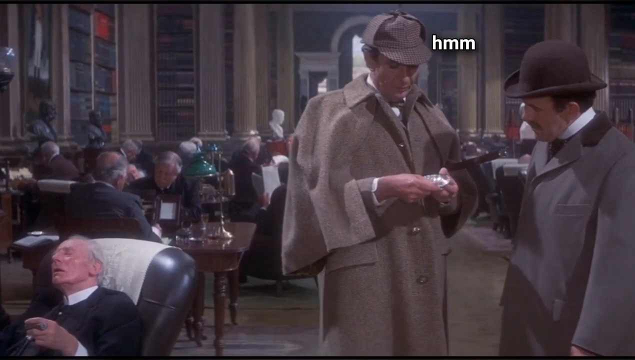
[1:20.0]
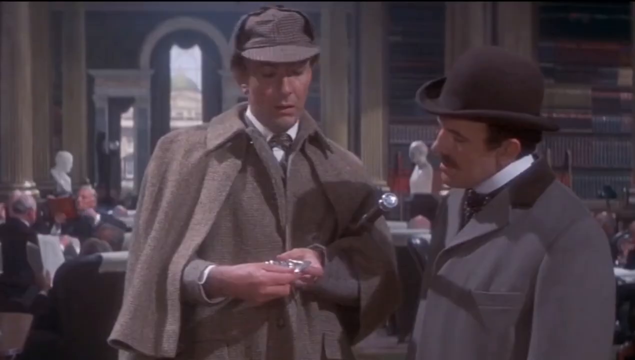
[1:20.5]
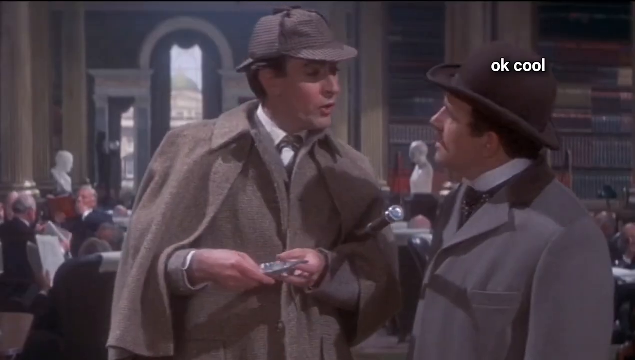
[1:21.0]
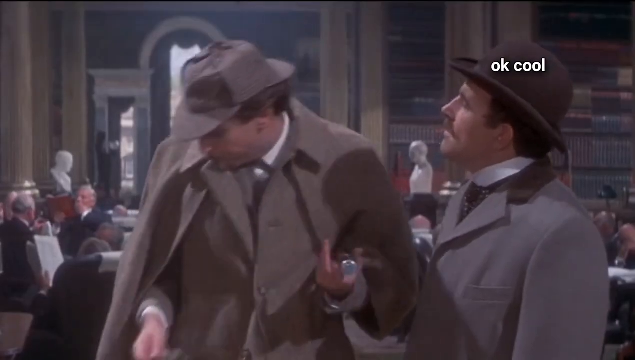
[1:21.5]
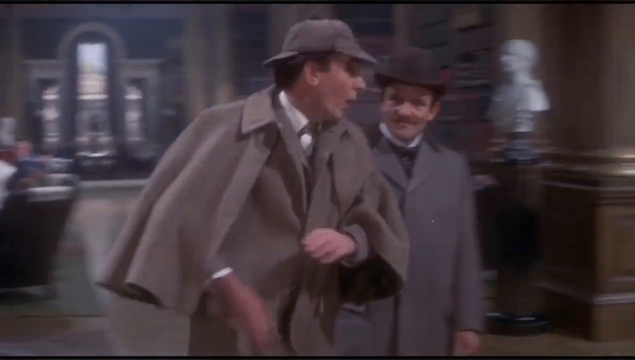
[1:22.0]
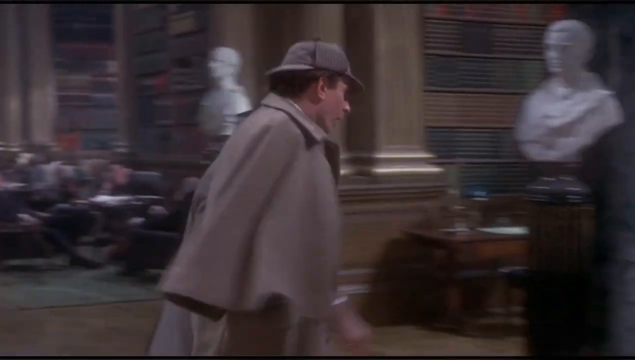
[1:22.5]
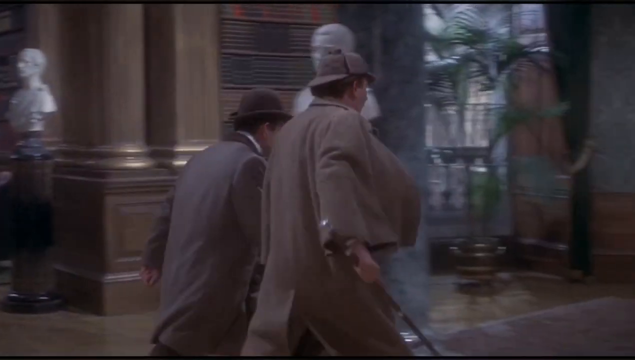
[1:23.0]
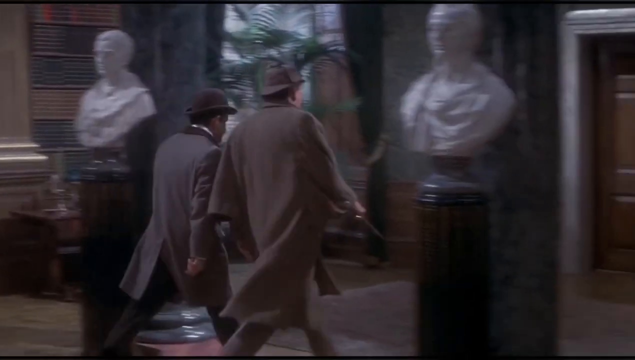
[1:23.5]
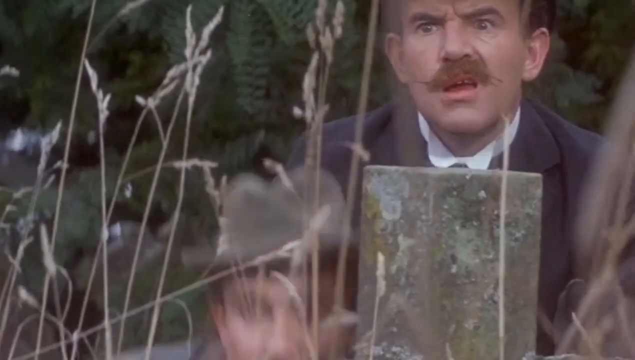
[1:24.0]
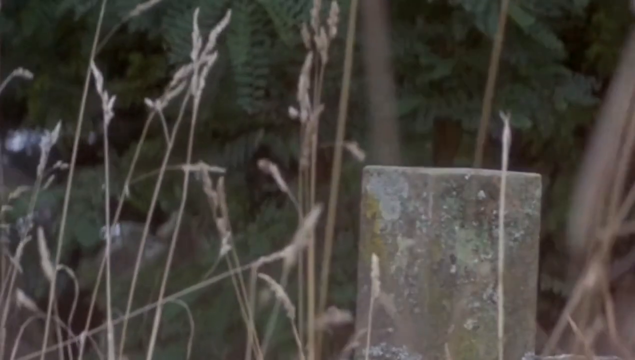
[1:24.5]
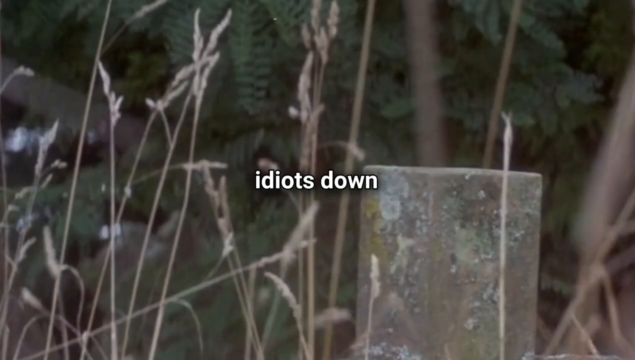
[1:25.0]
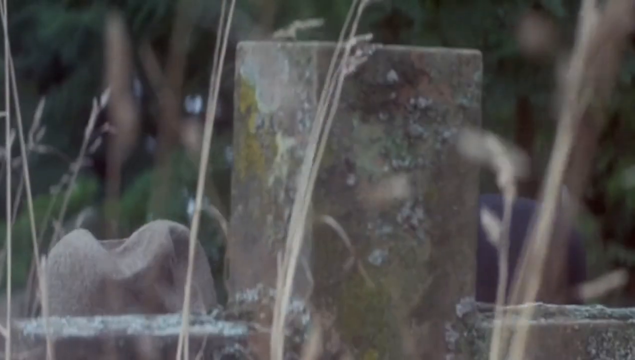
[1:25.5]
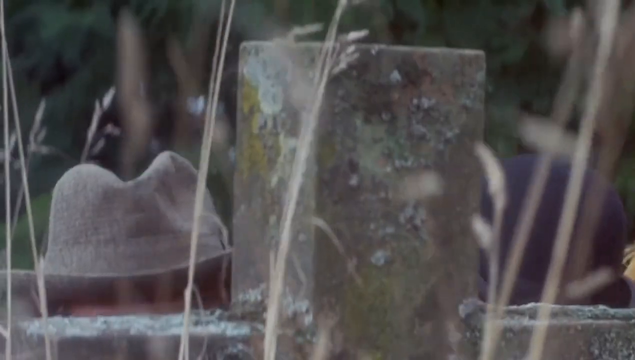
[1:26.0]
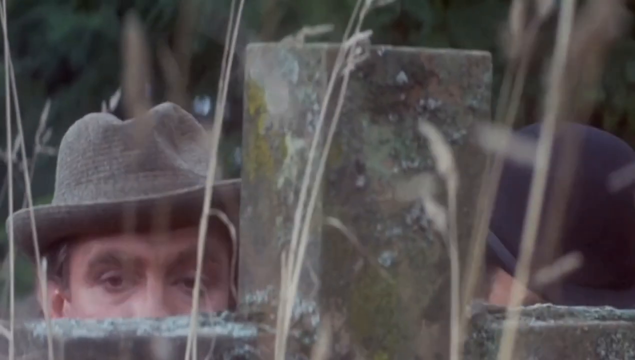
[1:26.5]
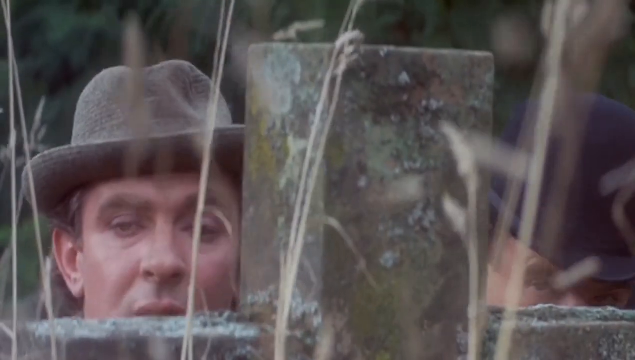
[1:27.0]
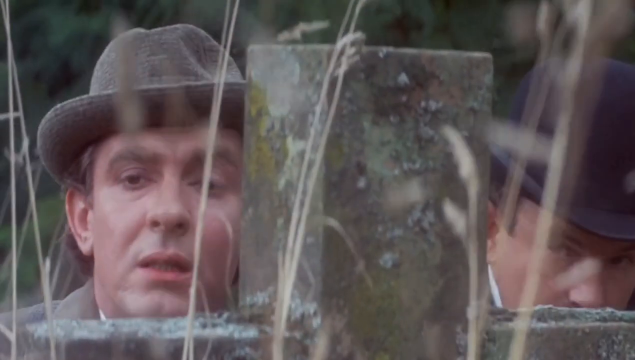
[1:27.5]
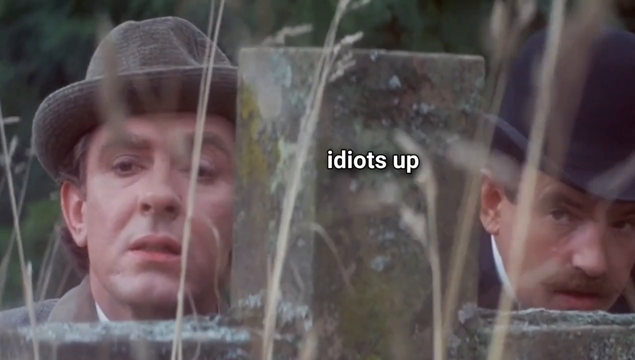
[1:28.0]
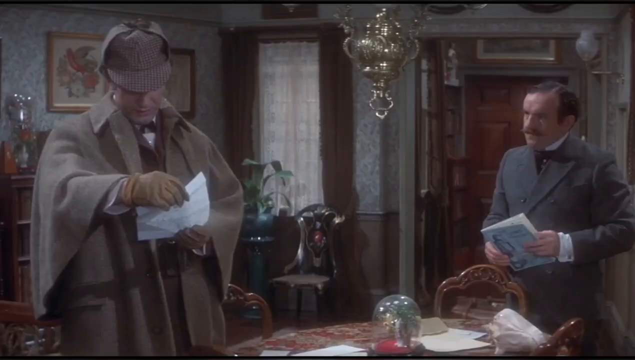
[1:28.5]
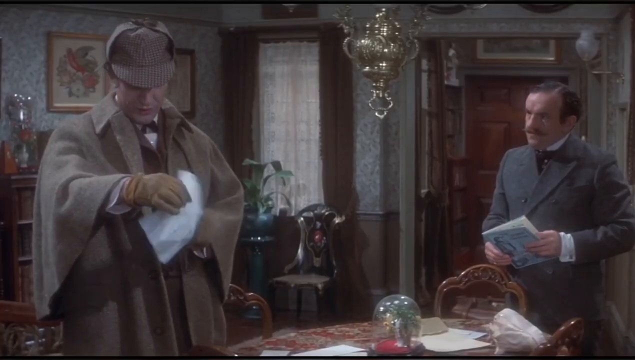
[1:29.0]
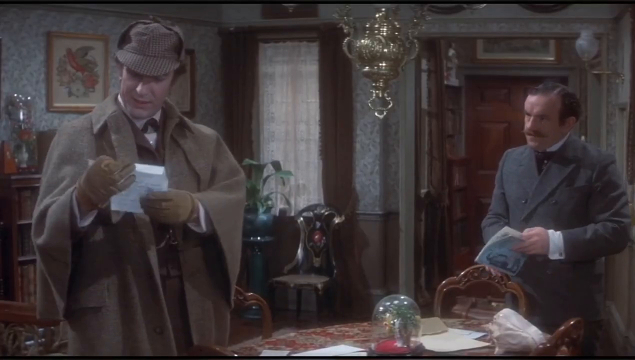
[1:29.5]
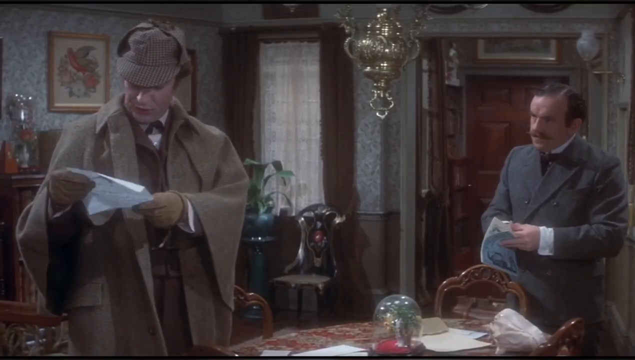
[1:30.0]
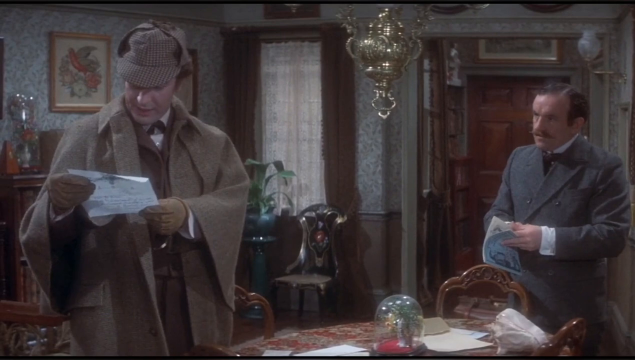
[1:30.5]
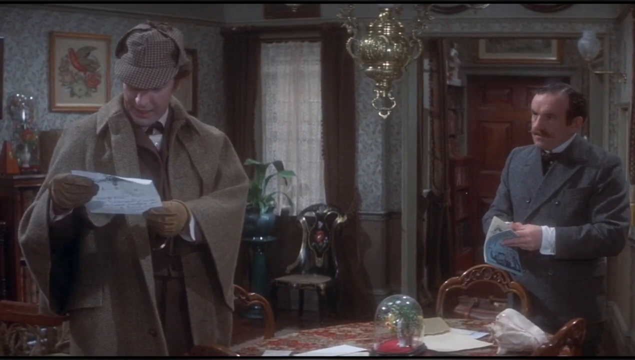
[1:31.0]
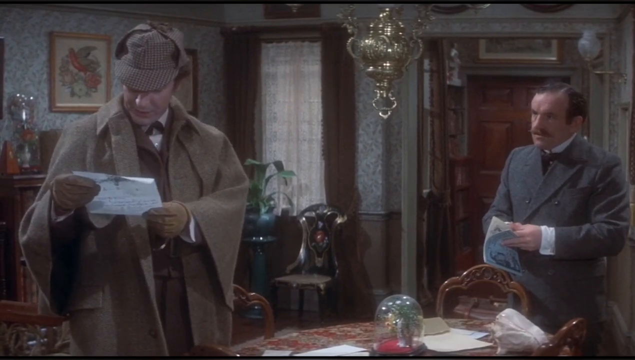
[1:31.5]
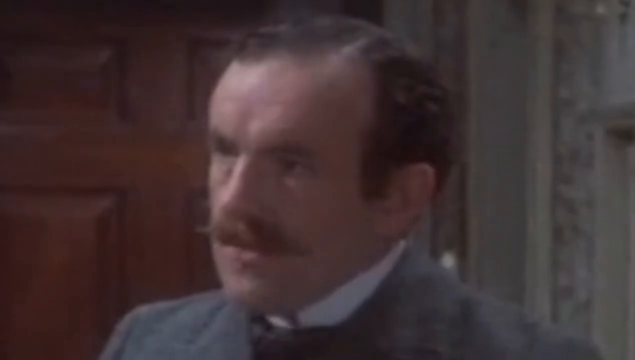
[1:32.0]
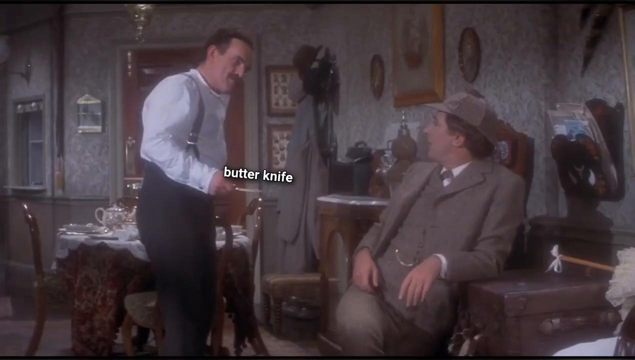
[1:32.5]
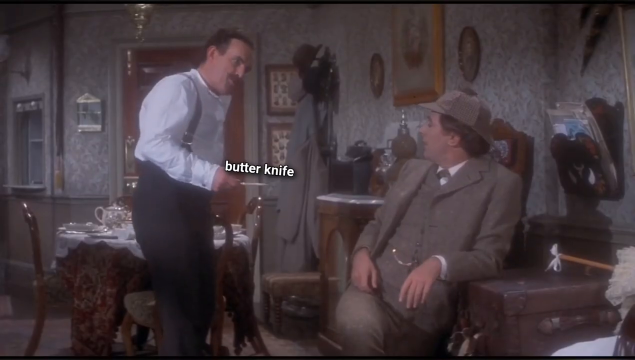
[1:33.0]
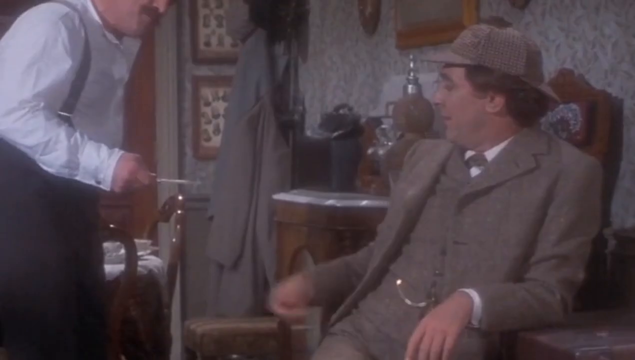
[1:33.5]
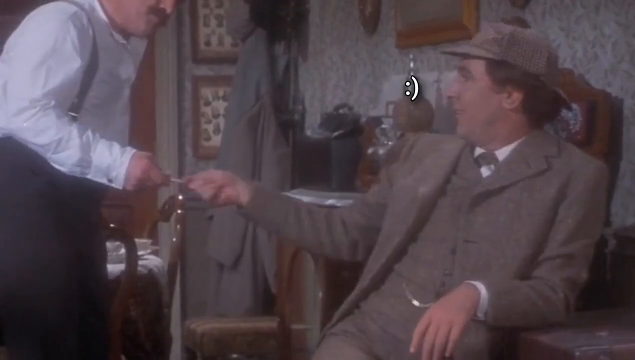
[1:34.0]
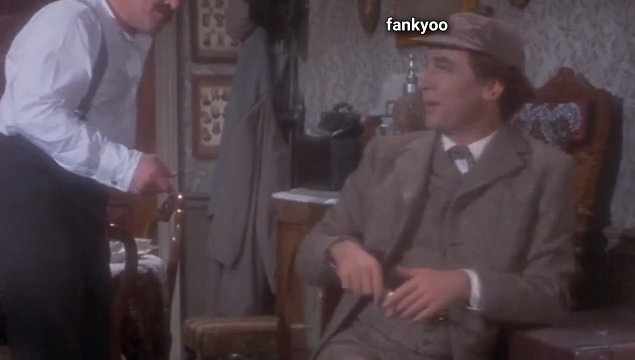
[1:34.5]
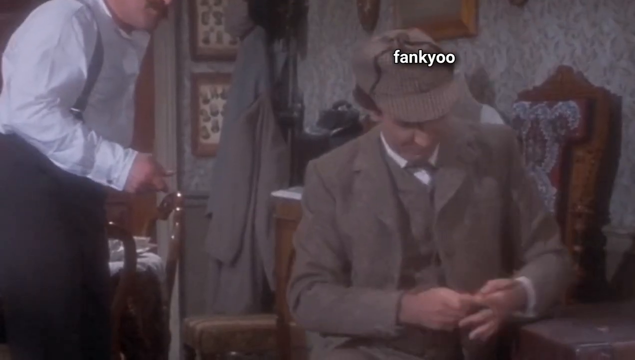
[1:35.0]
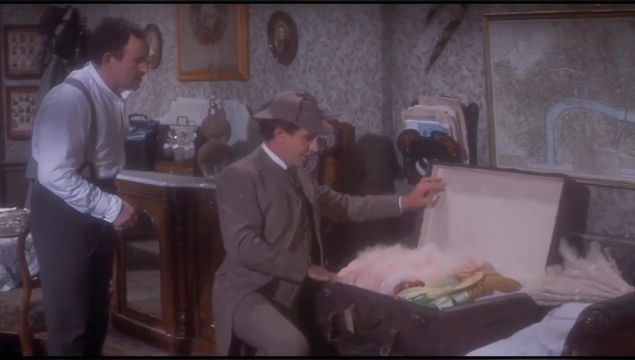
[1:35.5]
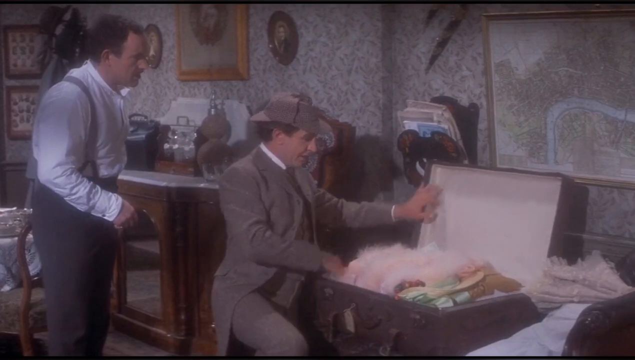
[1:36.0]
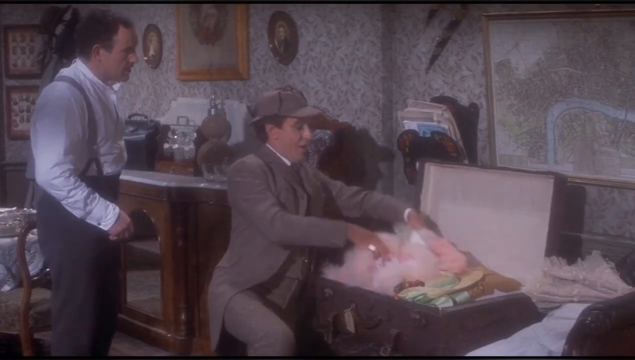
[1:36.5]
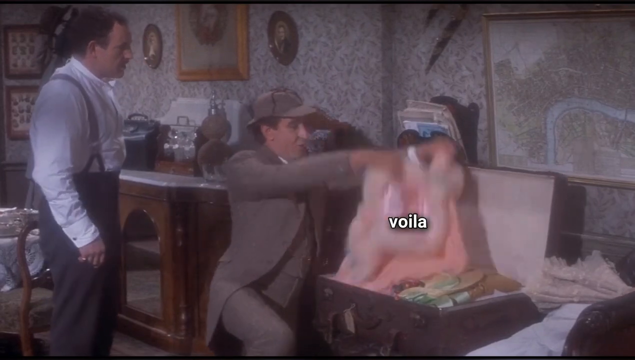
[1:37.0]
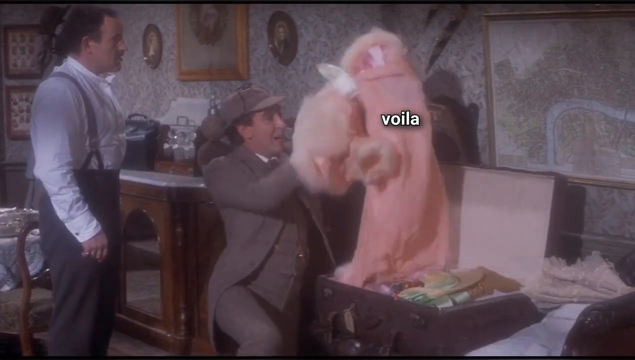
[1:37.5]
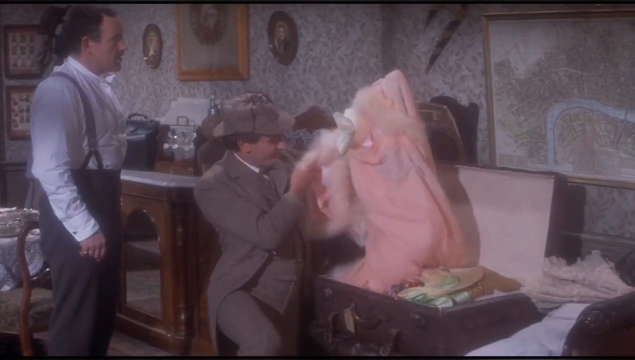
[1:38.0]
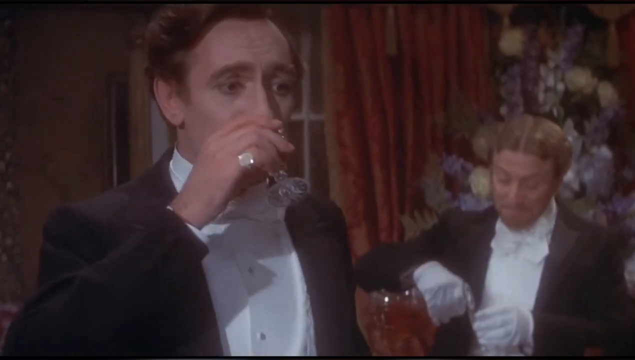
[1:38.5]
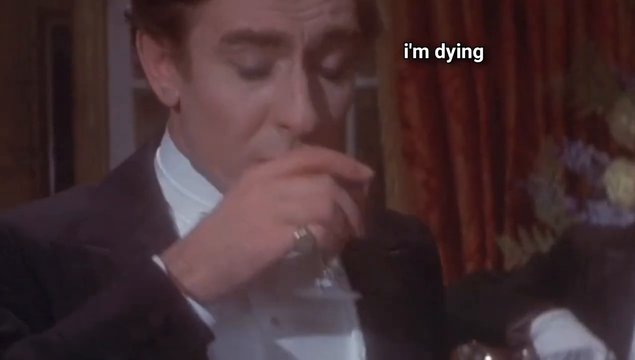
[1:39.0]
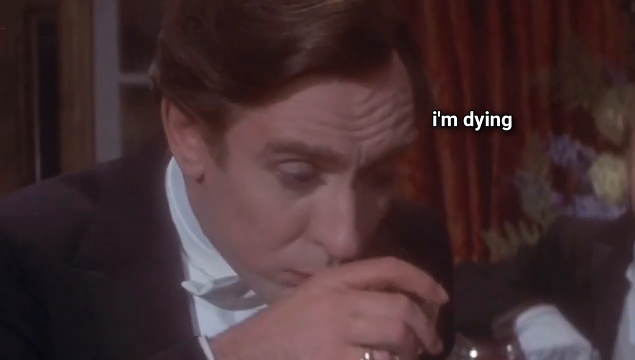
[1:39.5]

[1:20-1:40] The tall gentleman in the long beige trench coat and double-breasted old-style detective cap talks to the shorter man with black hair, who wears a black derby hat and a bluish gray suit coat. Both wear white dress shirts under their coats. They are in a large room with lots of older people, desks, tables and chairs. An older gentleman with white hair in a black recliner chair appears to be sleeping. Behind them, two gentlemen sit at a wooden table with a green reading lamp on it. Outside, the two men hide behind what looks like an old-style fence, trying to watch someone. Inside a room, they are back to looking inside a suitcase again; it holds a pink robe of the kind a woman would wear. On the wall behind them is a picture of a patchwork scene, with different paintings hanging in different places. A large old-style wood table is behind the gentleman, and what looks like a lamp is on a table.